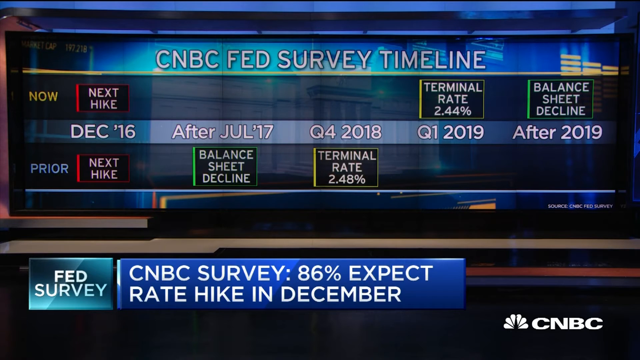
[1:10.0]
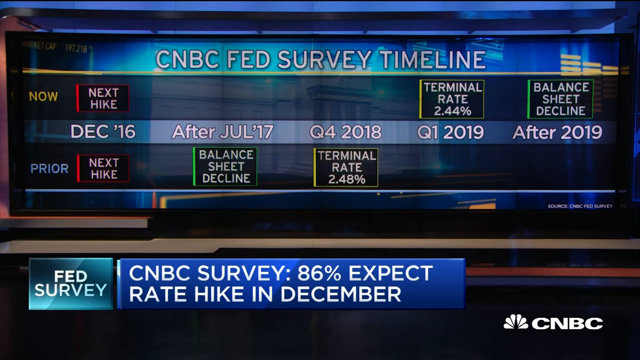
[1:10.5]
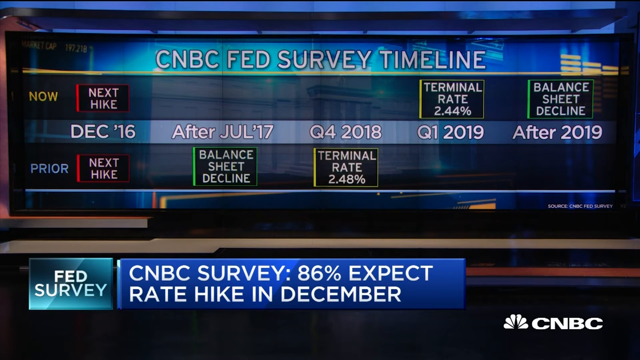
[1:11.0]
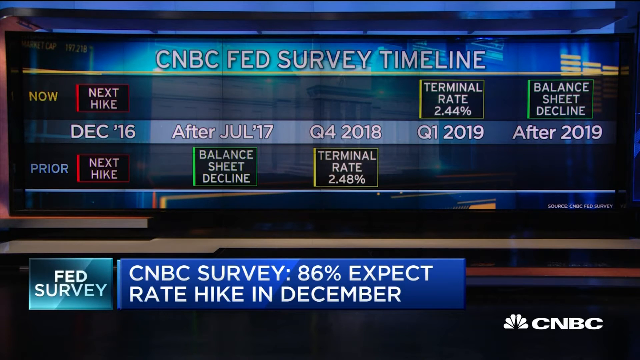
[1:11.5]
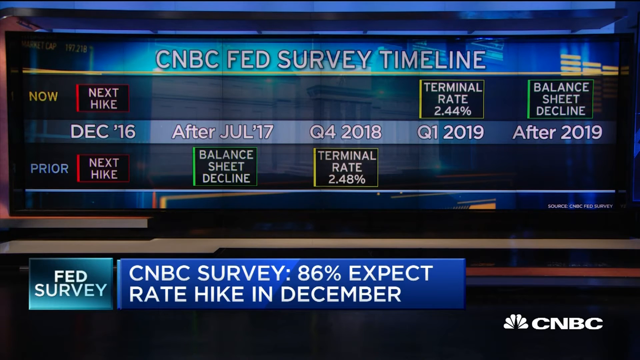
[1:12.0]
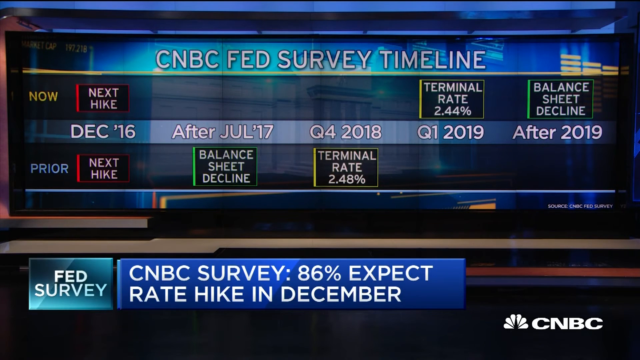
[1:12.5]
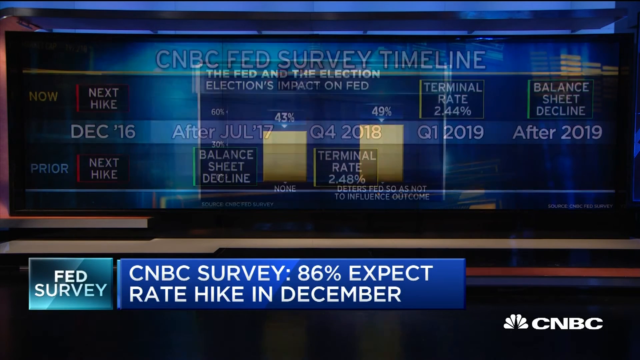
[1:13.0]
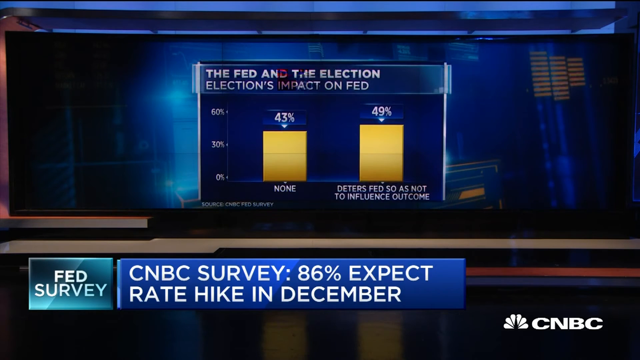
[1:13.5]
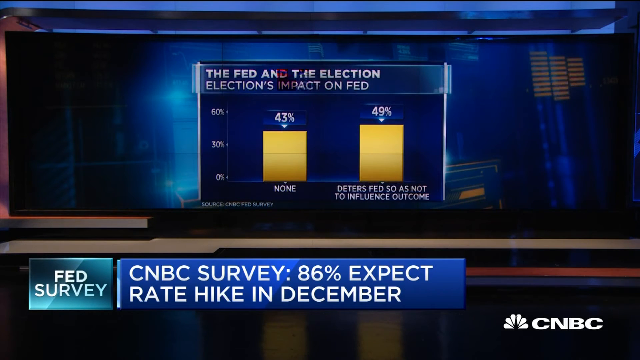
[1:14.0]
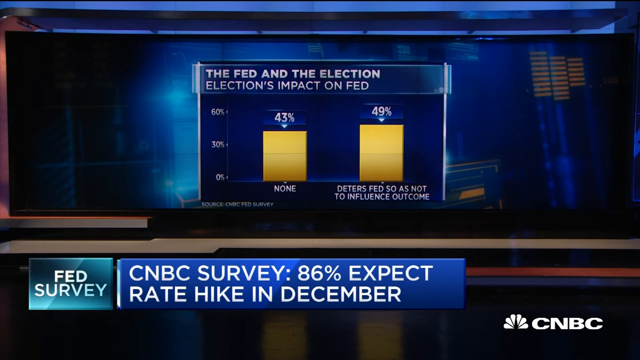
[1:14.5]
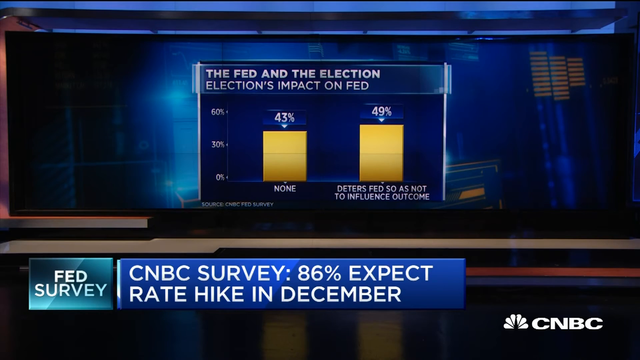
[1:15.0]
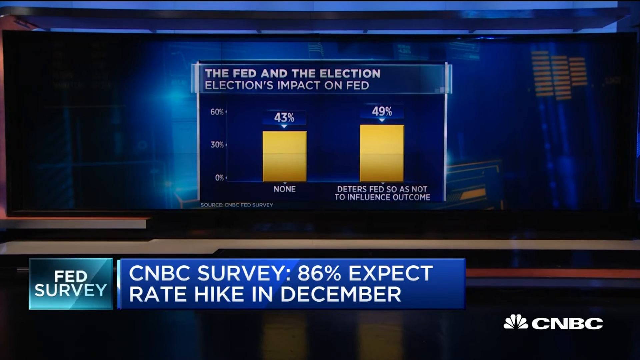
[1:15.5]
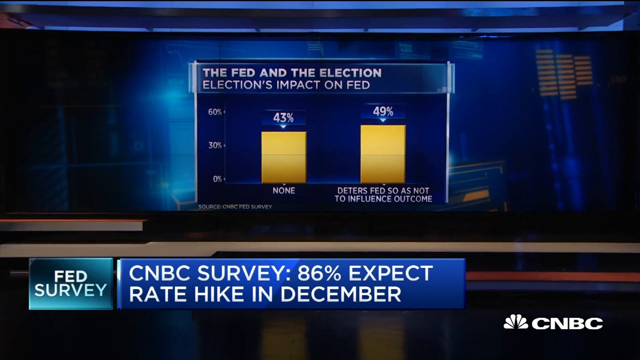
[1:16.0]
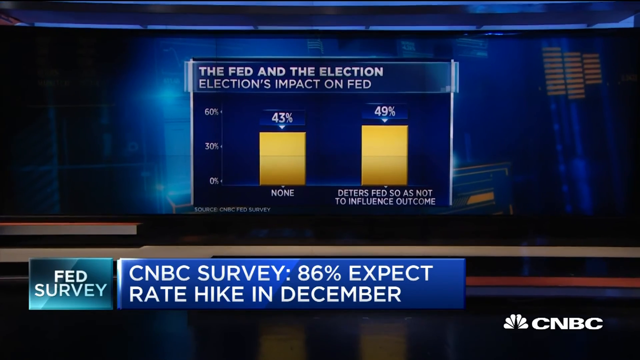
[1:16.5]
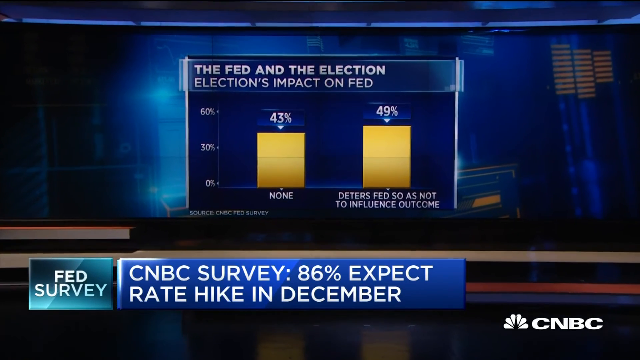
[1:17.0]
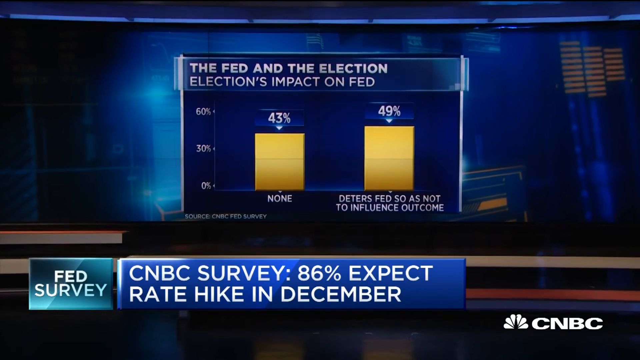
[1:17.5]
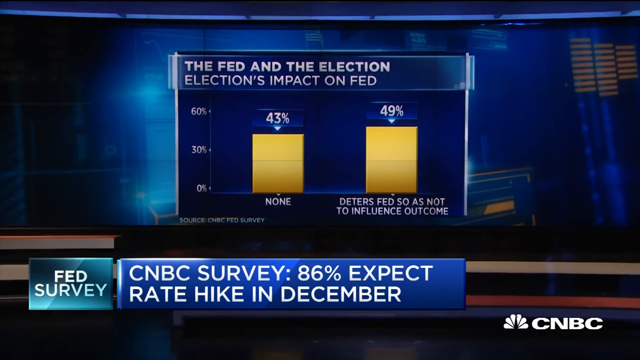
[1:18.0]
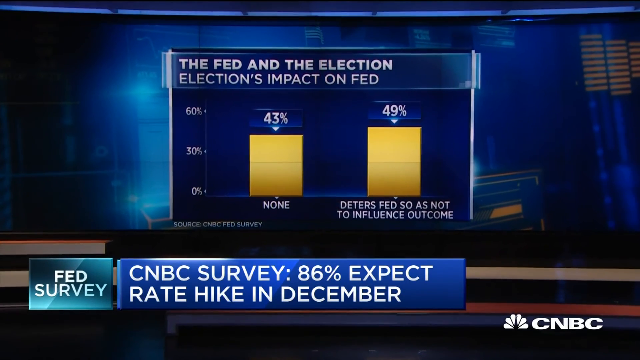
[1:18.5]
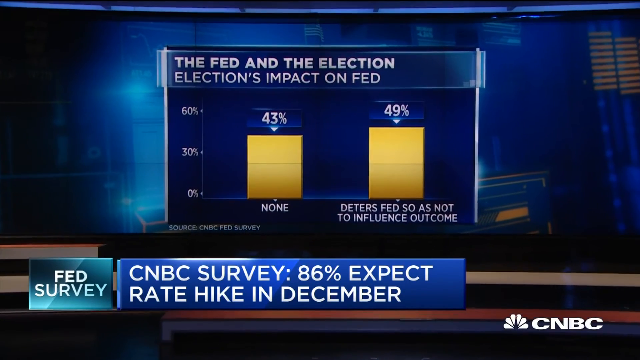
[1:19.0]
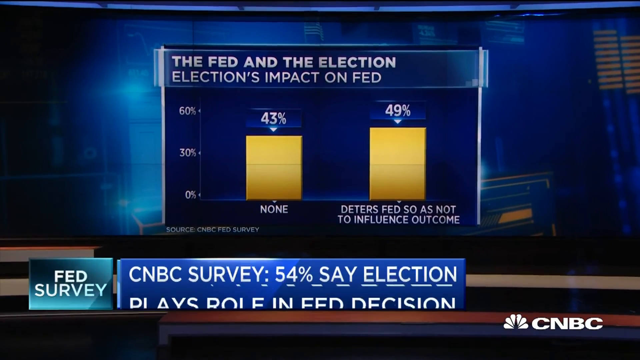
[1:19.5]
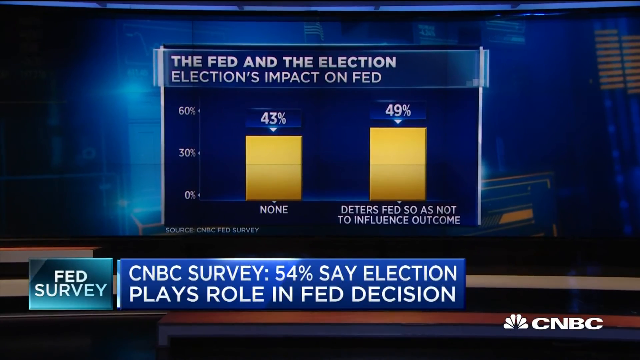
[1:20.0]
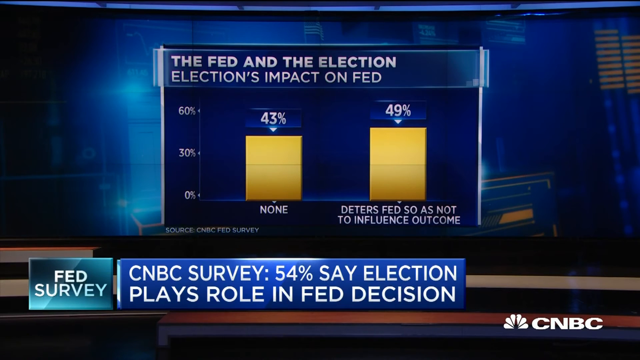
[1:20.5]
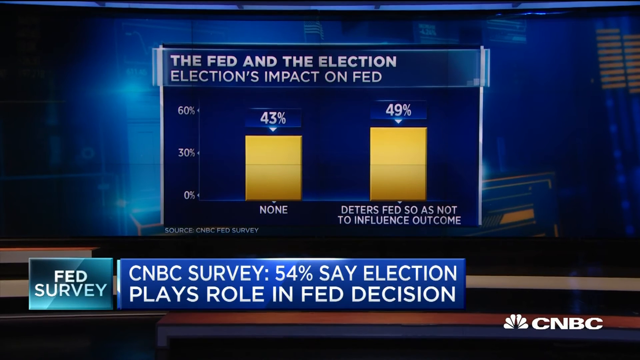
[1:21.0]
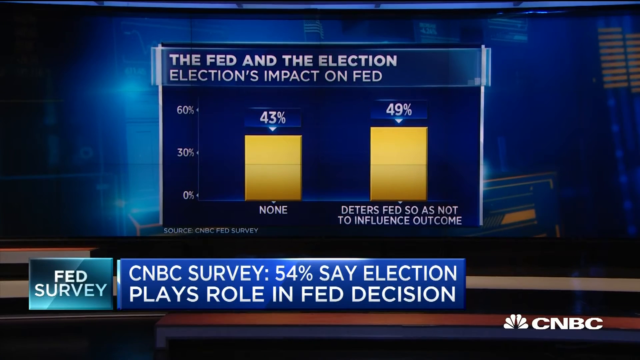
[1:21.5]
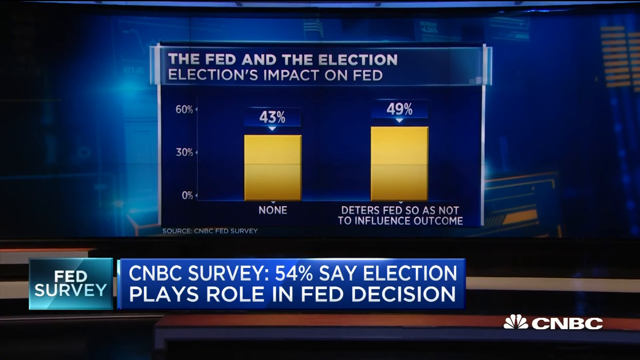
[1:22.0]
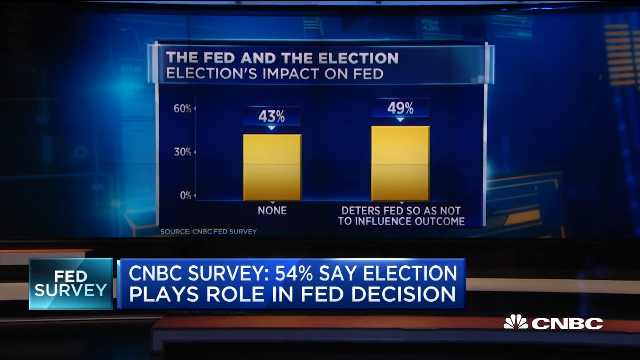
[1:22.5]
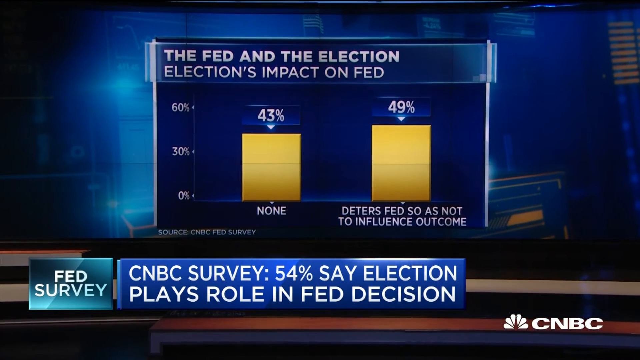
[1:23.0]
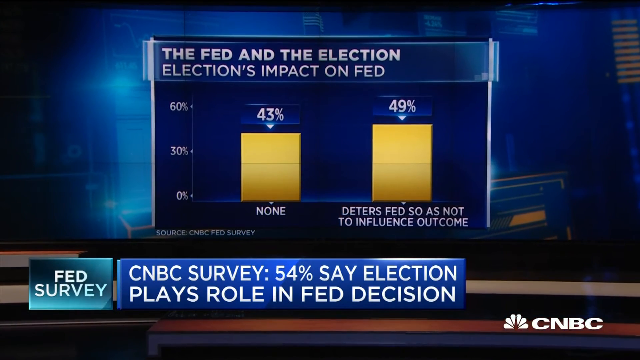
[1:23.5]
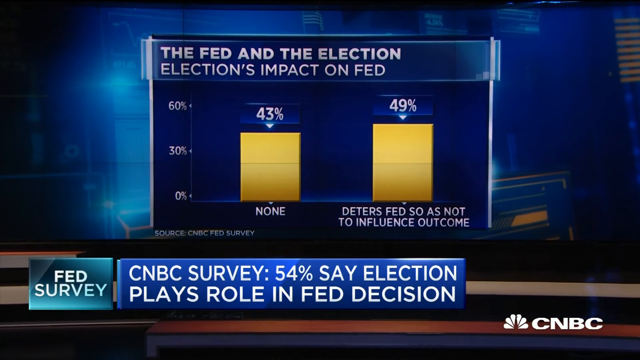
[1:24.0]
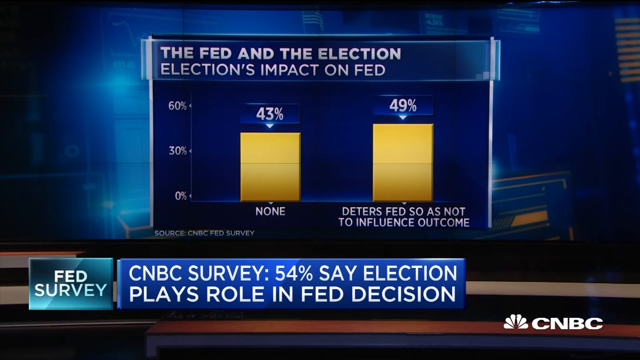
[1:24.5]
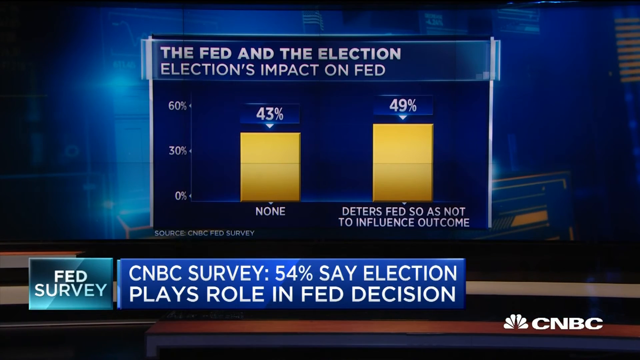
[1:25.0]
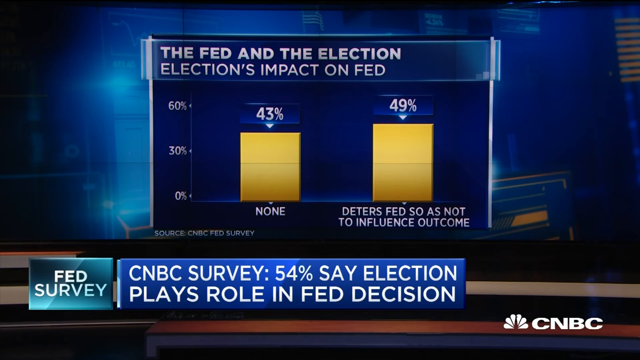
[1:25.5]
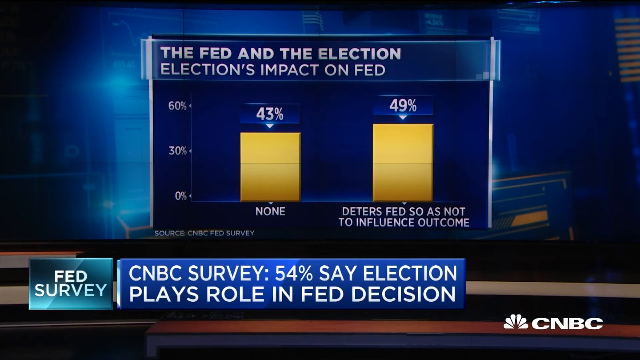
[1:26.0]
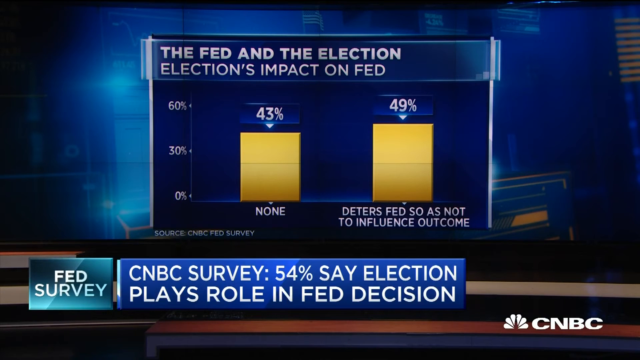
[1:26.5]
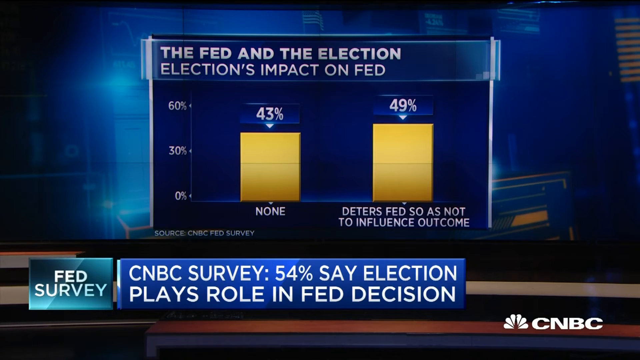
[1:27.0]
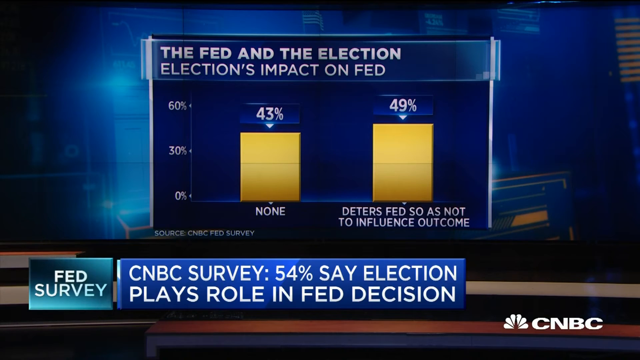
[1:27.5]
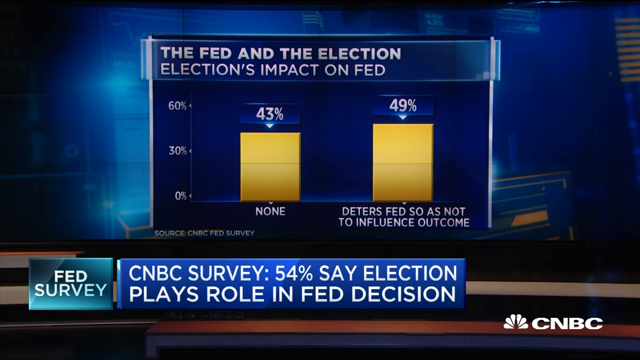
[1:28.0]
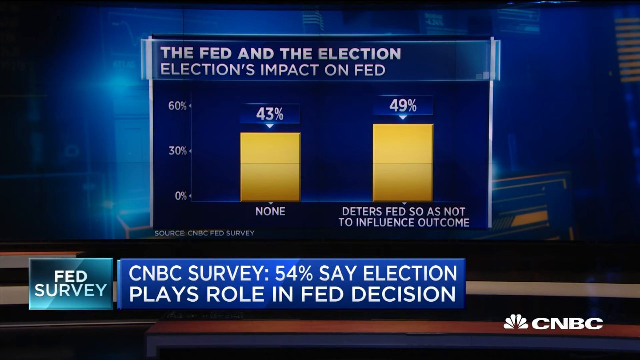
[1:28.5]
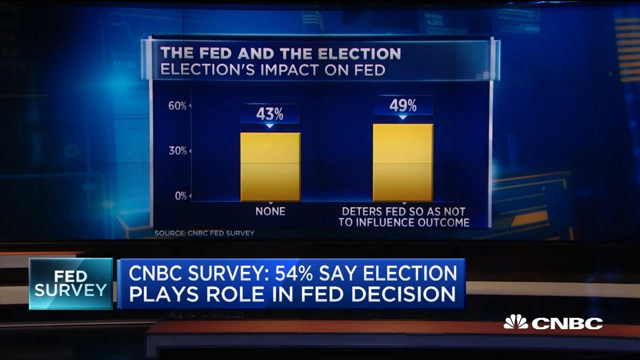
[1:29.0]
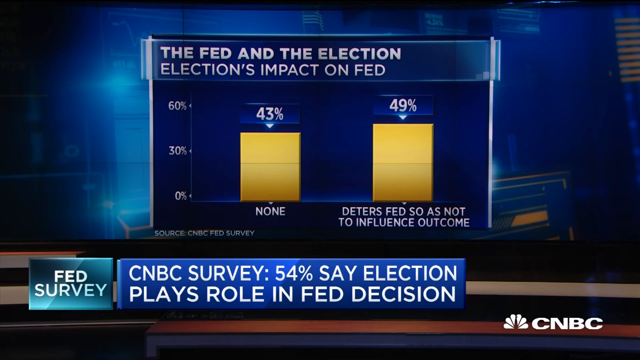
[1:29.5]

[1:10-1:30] The CNBC Fed survey timeline shows "now" written in yellow beside next hike, with a terminal rate of 2.44 percent and balance sheet decline. Then come "December 16", "after July 17", "Q4 2018", "Q1 2019", and "after 2019", followed by prior next hike, balance sheet decline, and terminal rate 2.48. A CNBC survey line reads "86 percent expect rate hike in December". Next, "the Fed and the election" and "elections impact on Fed" appear with a bar chart marked 60, 30, and 0 along the side. One bar shows 43 percent with "none" underneath it, and a taller bar shows 49 percent with text underneath ending "Fed so as not to influence outcome". A line reads "CNBC survey 54 percent say election plays role in Fed decision".